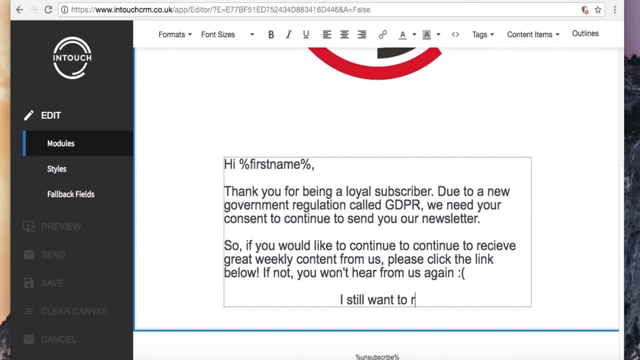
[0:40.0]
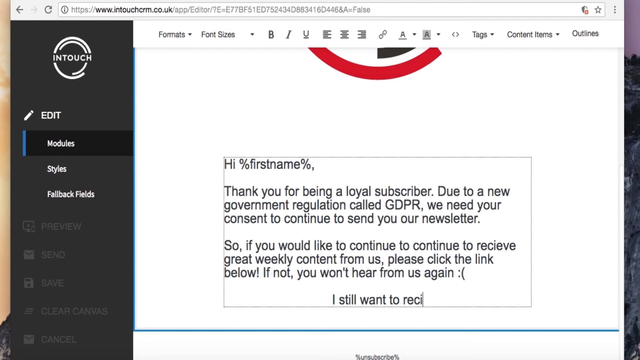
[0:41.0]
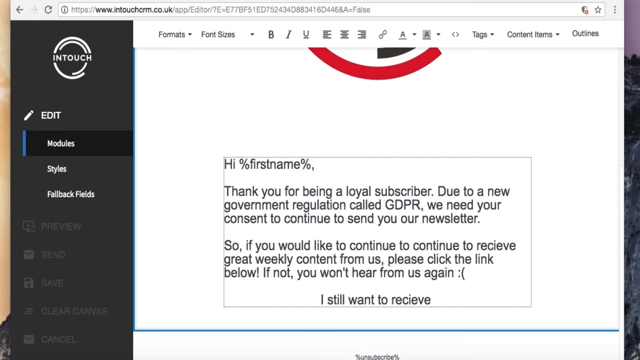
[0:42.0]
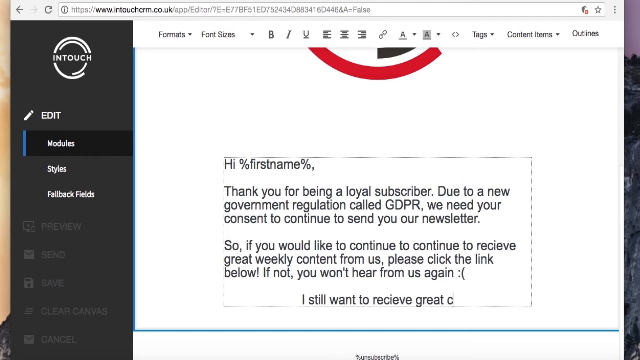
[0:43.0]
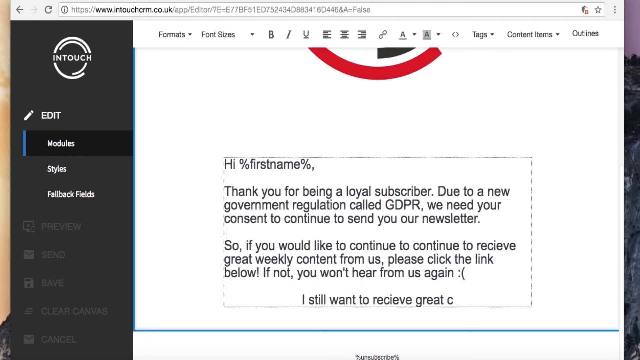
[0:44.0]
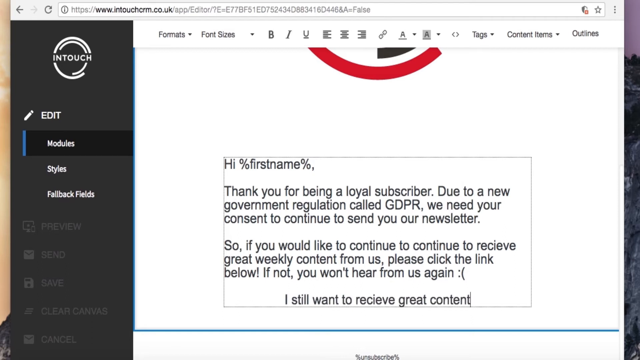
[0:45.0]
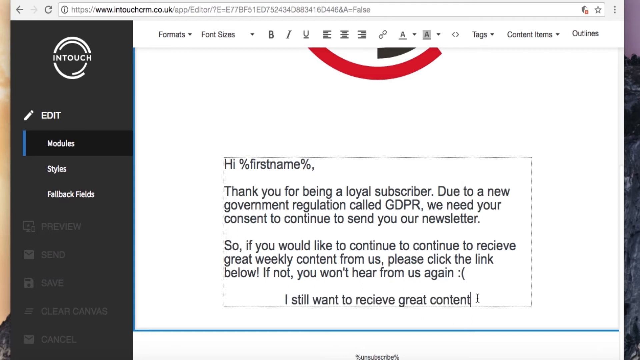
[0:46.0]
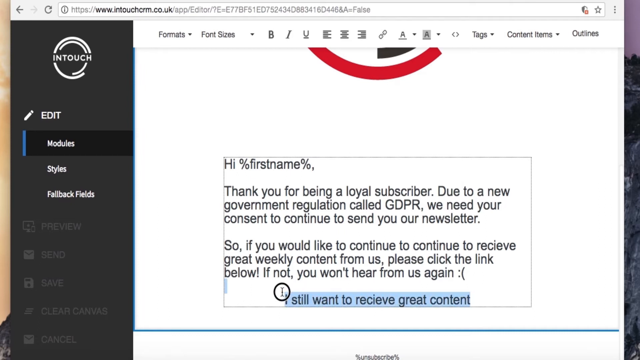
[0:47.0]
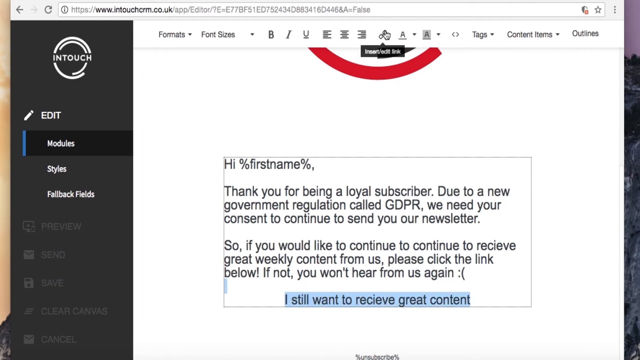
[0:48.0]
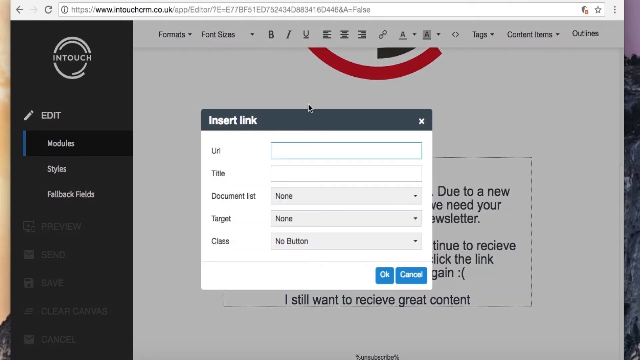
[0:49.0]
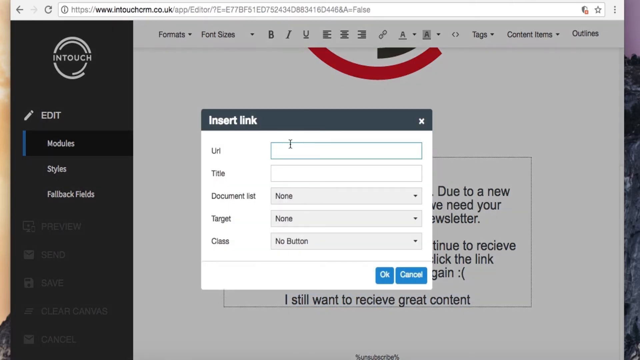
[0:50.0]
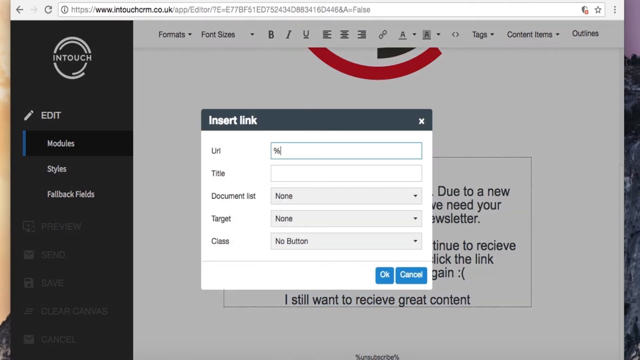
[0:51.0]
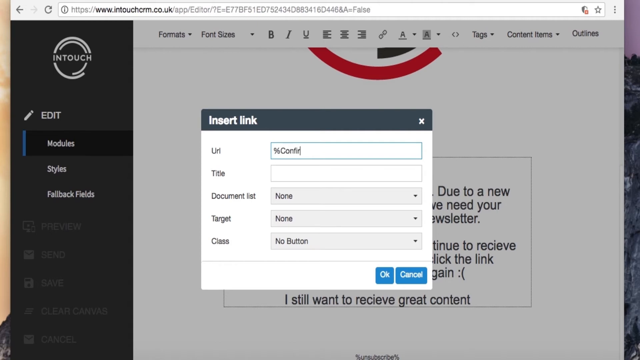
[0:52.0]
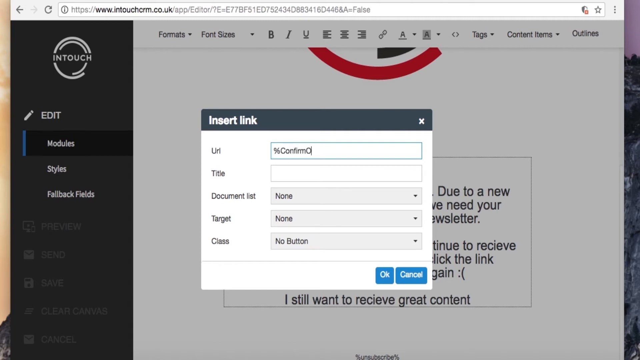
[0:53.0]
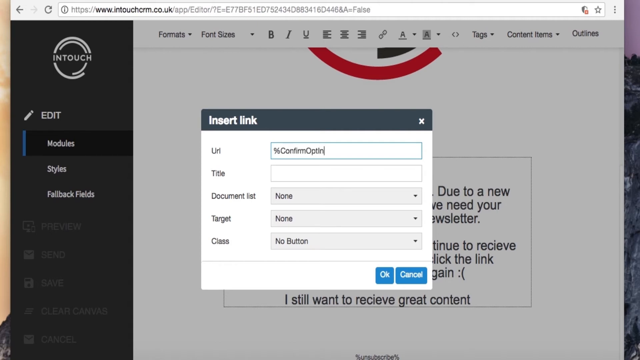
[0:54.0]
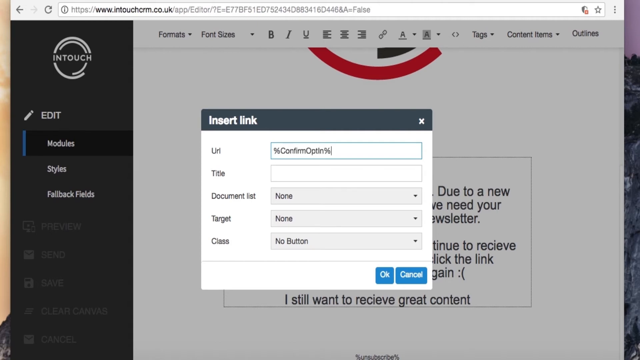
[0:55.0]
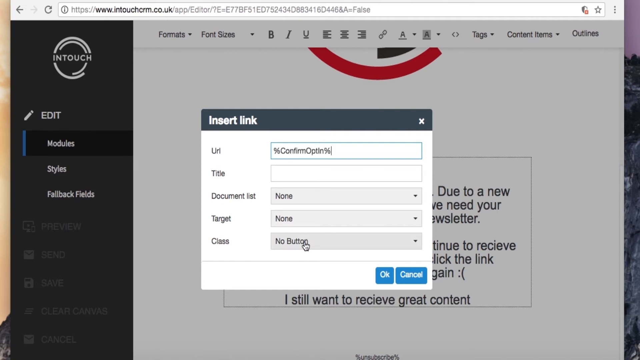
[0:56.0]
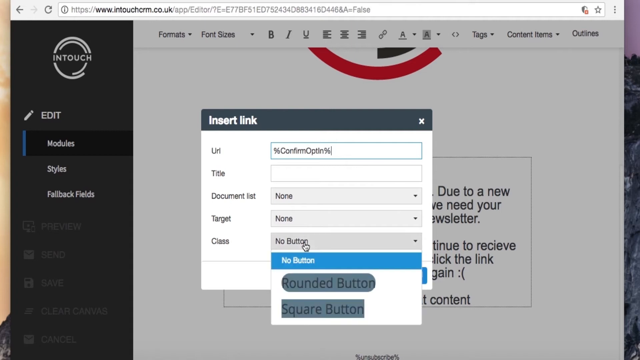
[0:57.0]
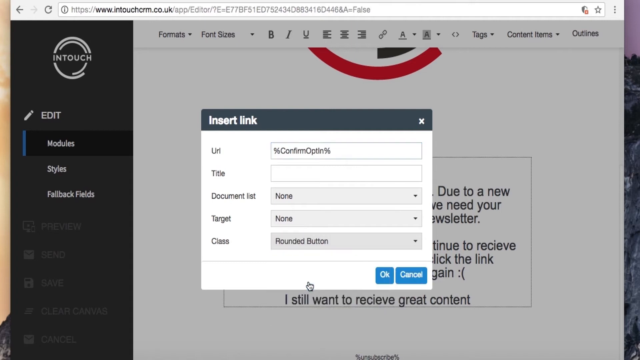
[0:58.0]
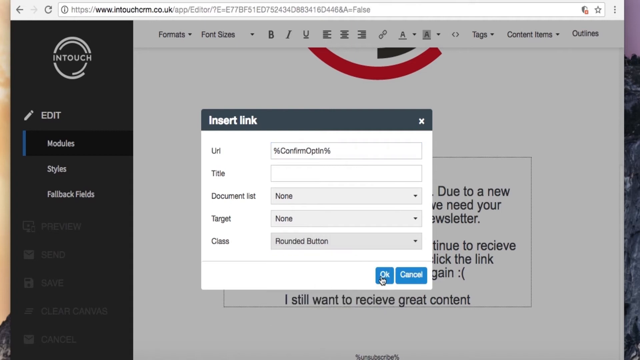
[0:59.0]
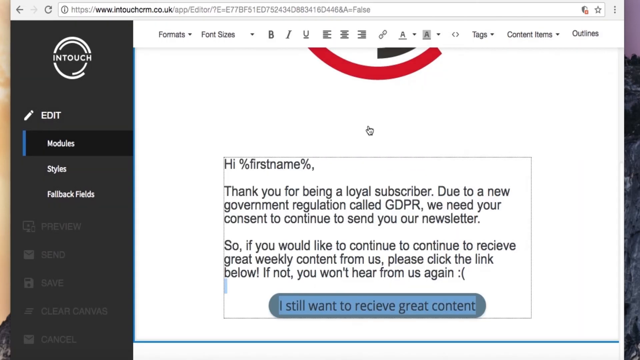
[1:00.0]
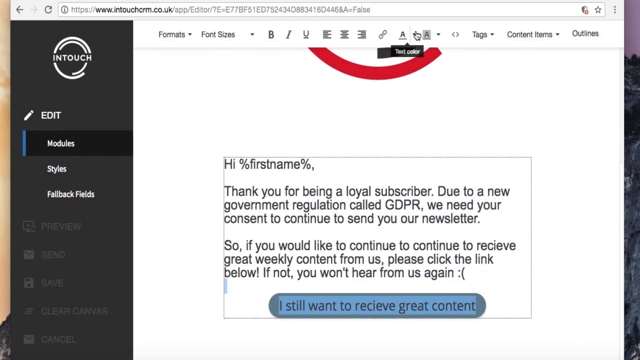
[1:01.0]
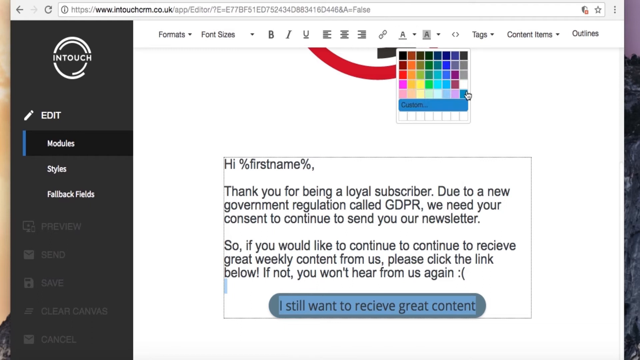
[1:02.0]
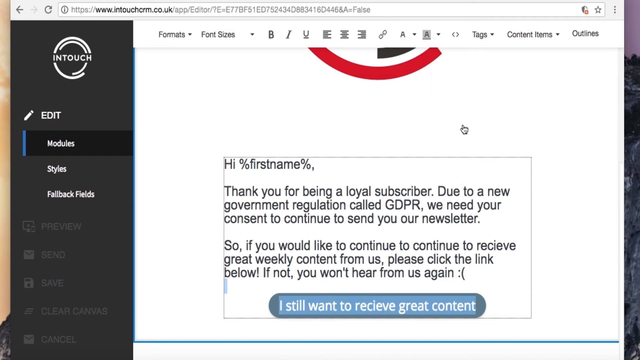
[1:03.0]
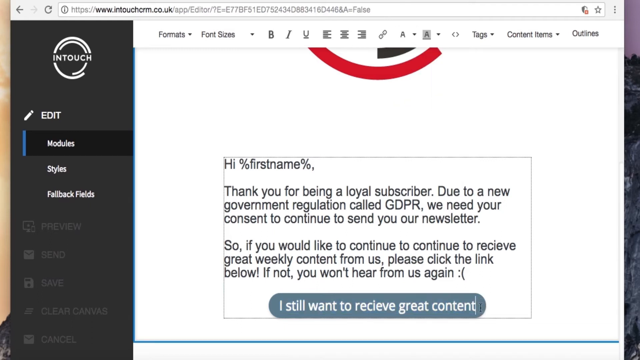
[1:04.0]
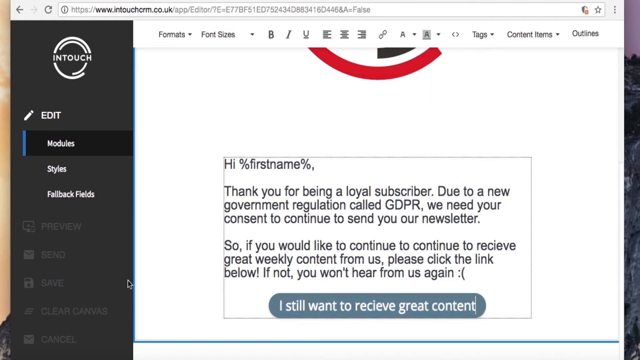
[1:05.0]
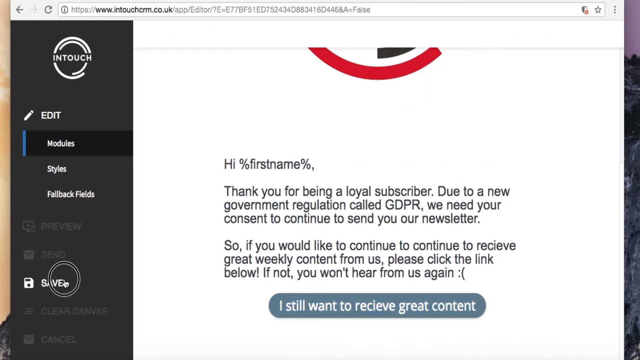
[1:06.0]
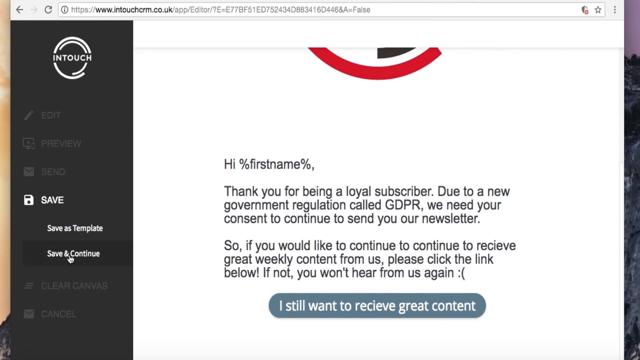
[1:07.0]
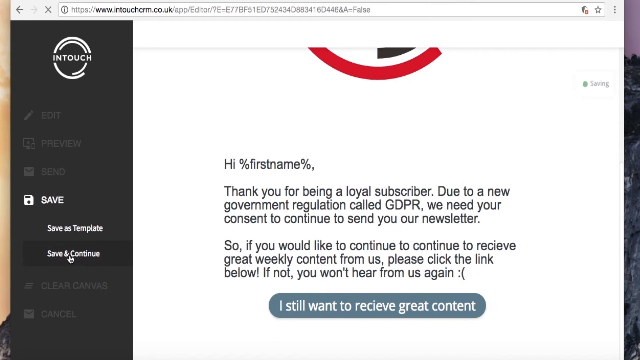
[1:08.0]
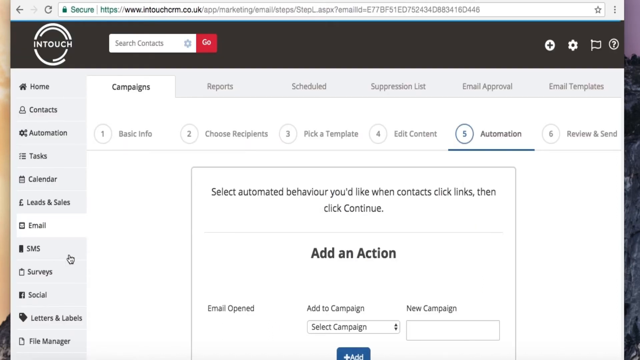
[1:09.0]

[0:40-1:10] The little box being typed in has a header followed by two paragraphs of three lines each. Underneath them, in the center, "I still want to receive great content" is typed. The text is highlighted blue, and the insert link tab at the top is clicked, which brings up an insert link window in the center with a blue bar across the top and then white. Down its left side are URL, title, document list, target and class, all of which can be changed, and in the bottom right are a blue OK button and a blue cancel button. Something is typed into the URL field, the setting is switched from no button to rounded button, and OK is clicked. Next the color option at the top is clicked and changed to dark blue. Then Save and Continue on the left is clicked, followed by Automation at the top, which returns to the original page.